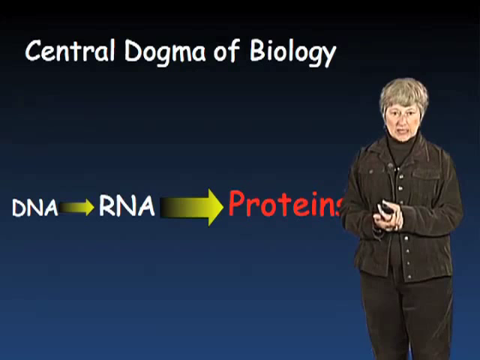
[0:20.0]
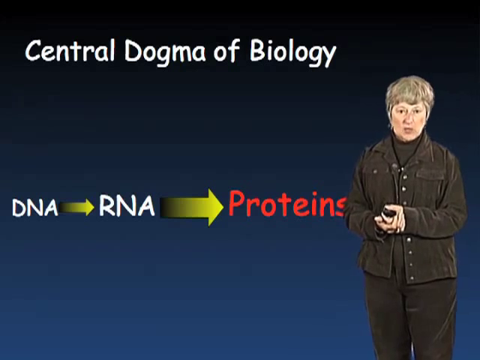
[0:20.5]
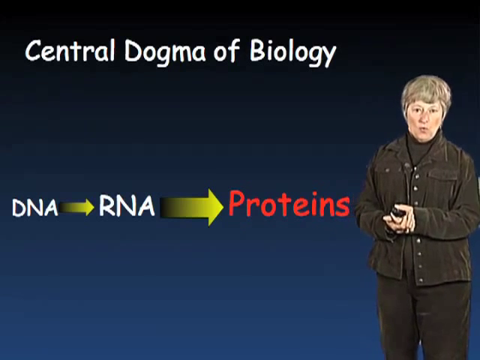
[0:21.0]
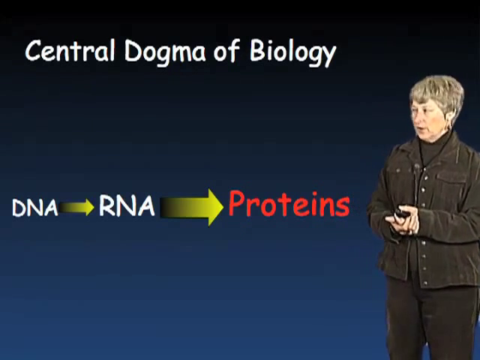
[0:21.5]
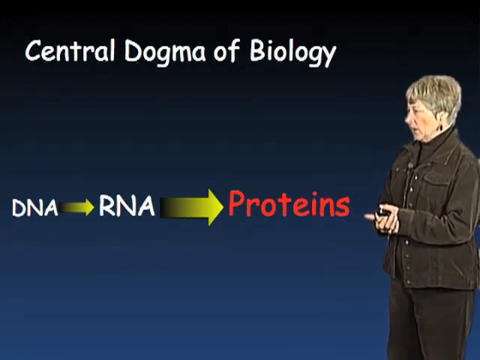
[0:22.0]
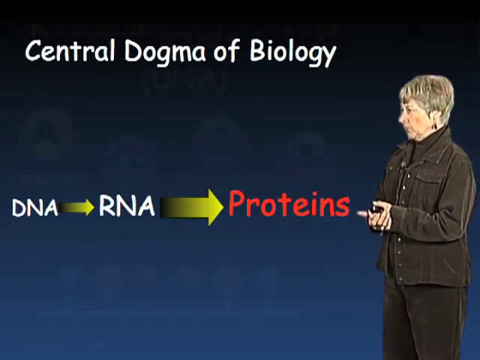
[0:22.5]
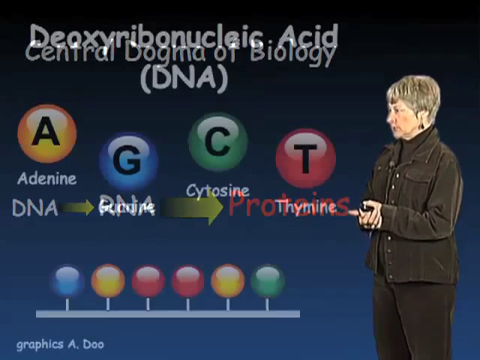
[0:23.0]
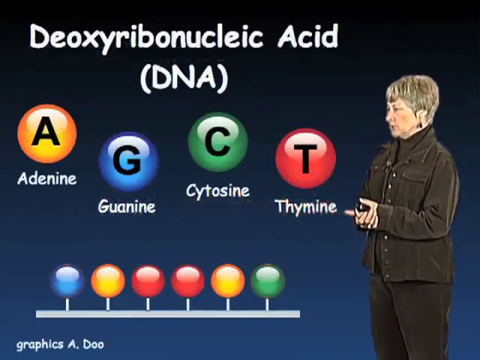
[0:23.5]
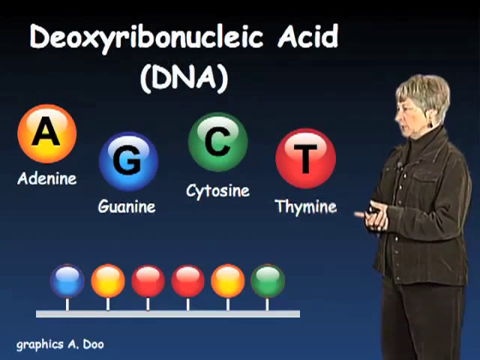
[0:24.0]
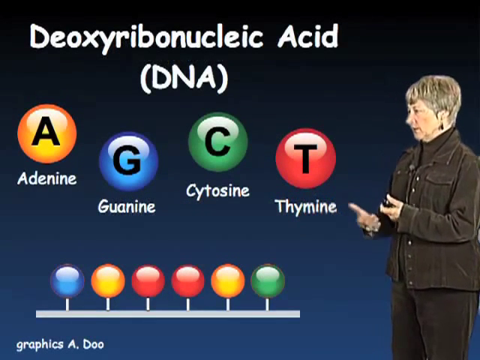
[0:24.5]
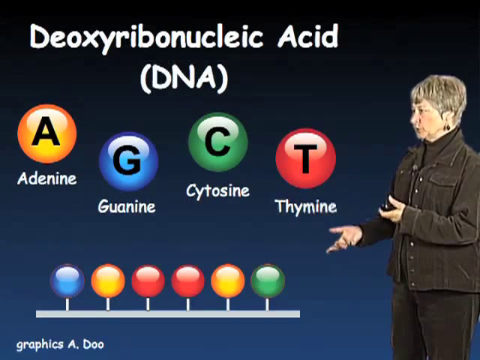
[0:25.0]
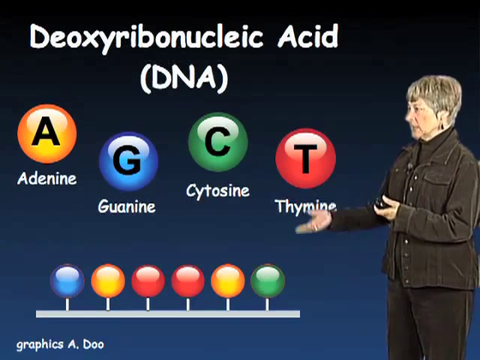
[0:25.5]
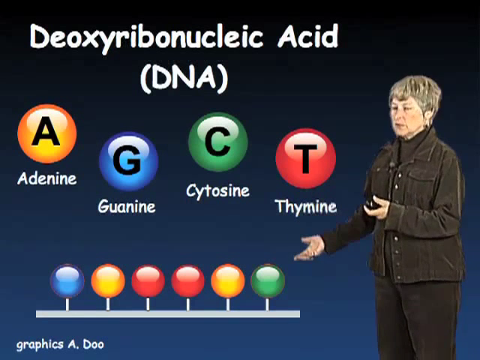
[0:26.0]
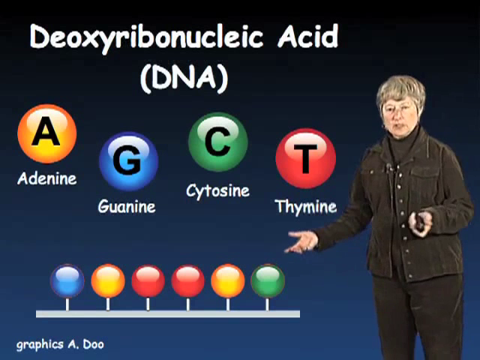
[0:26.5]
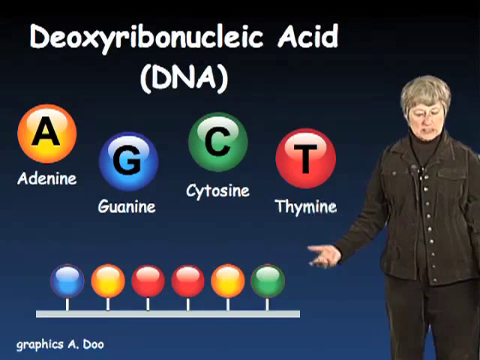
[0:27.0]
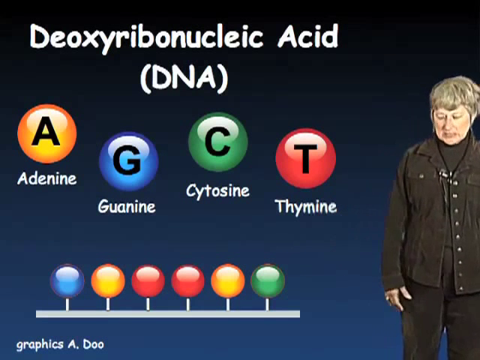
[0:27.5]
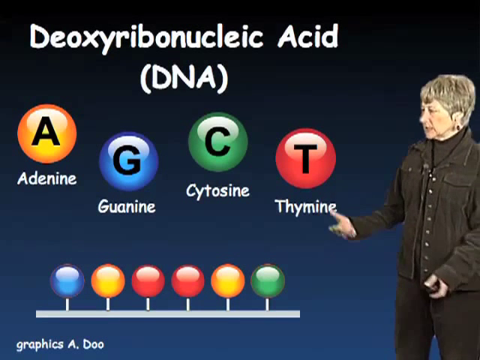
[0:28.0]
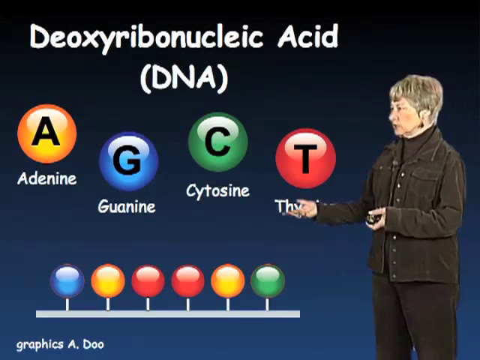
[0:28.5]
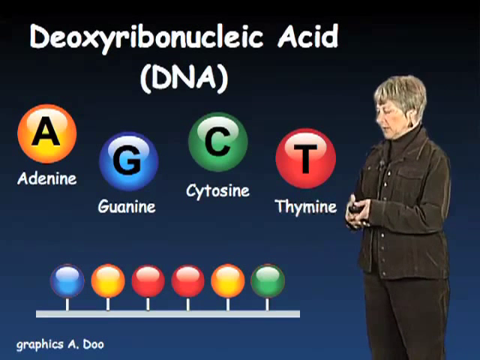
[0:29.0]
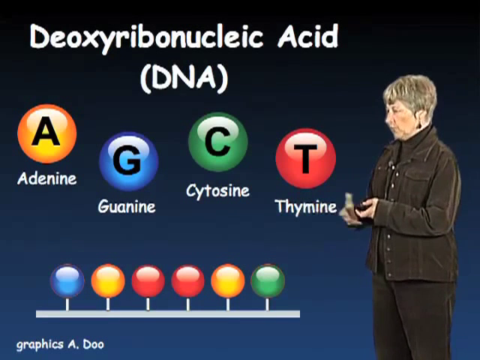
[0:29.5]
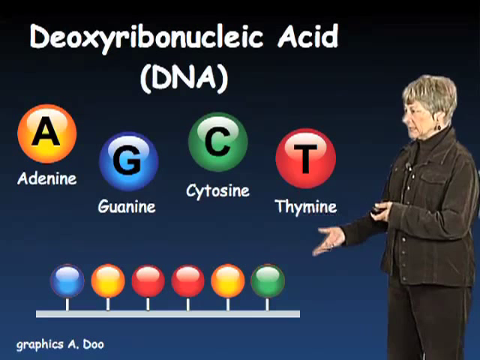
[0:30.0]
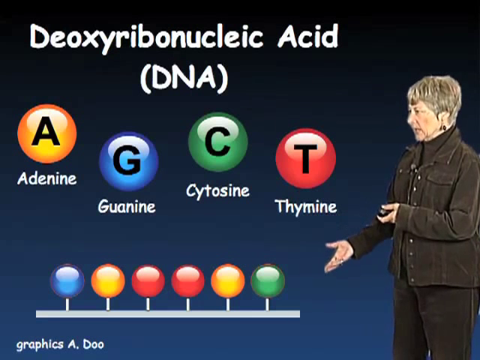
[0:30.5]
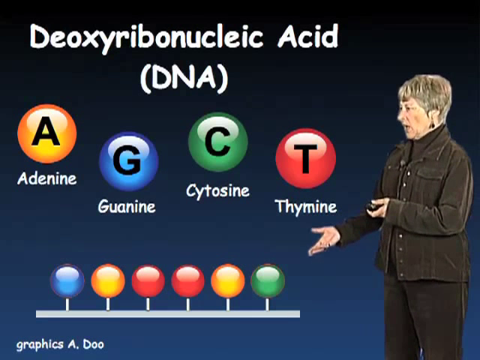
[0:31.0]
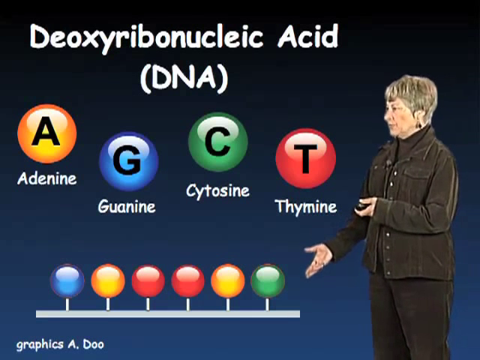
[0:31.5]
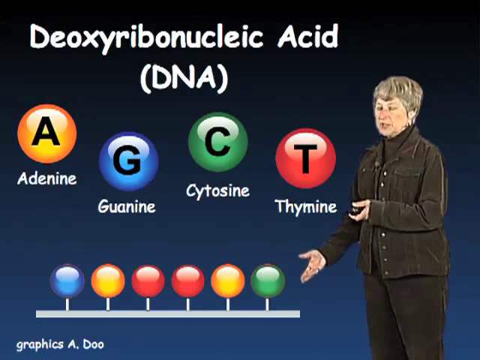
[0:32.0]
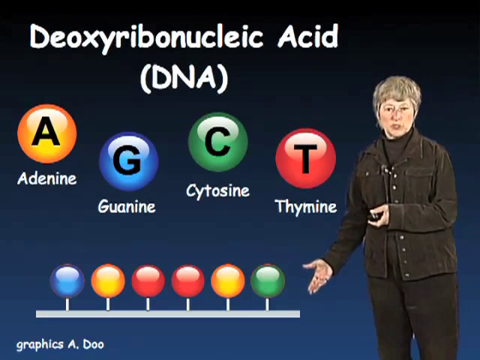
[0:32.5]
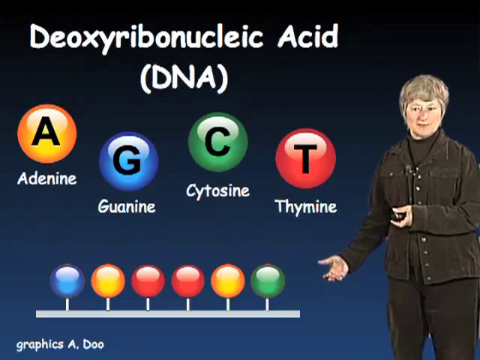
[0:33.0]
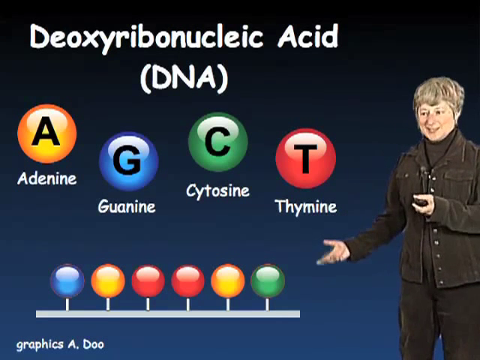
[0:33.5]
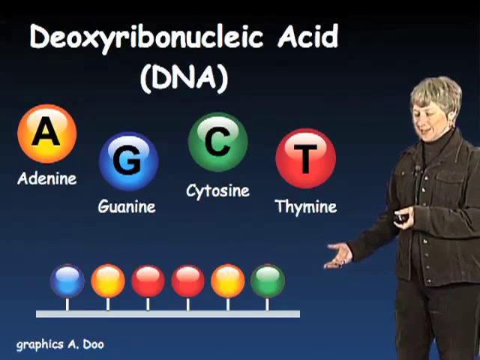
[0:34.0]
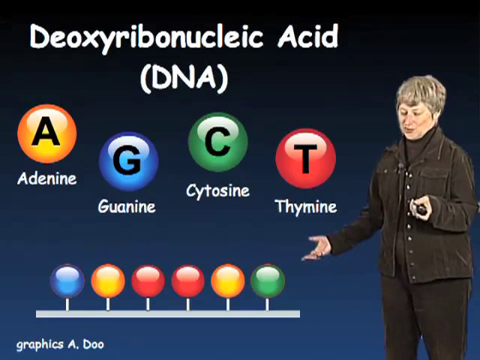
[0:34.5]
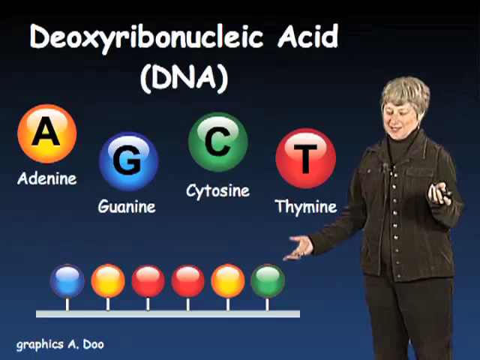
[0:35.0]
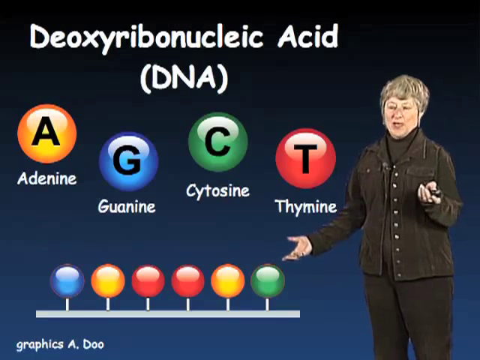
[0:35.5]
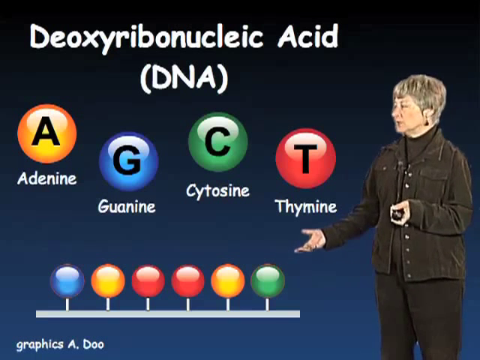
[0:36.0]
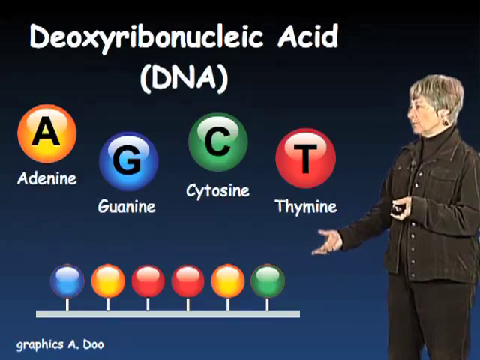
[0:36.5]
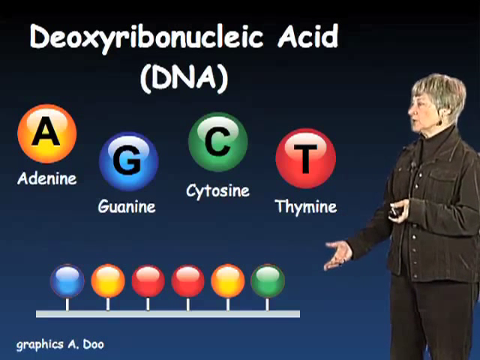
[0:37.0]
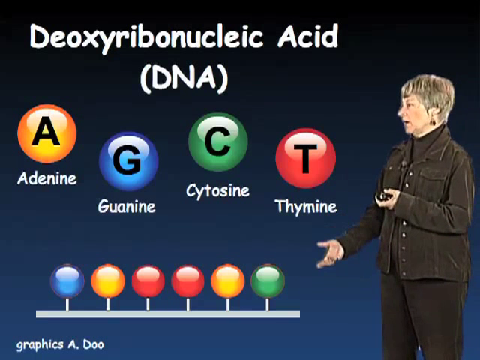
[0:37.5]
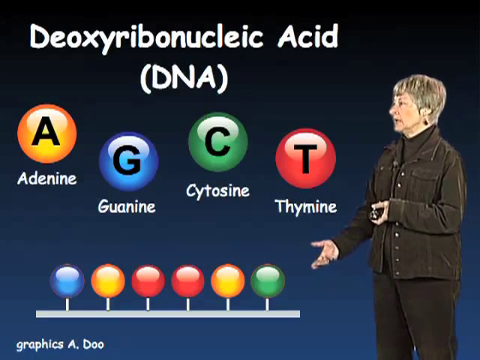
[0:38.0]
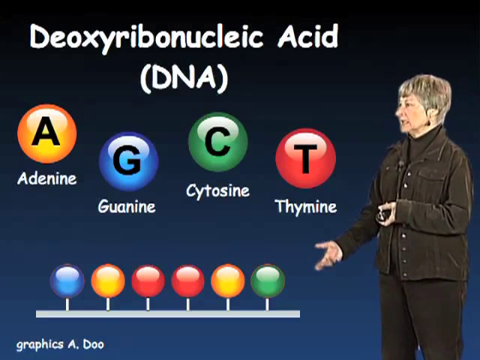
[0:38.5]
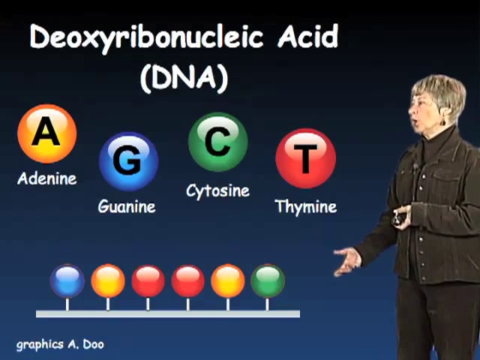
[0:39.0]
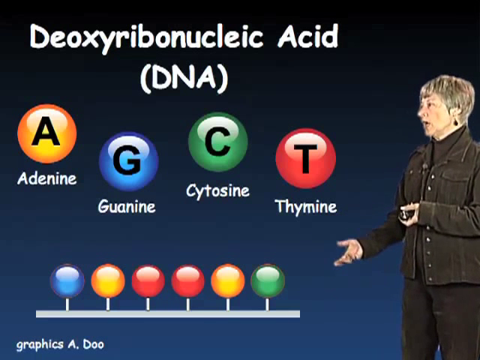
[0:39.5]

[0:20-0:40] A screen of text is shown with a person in the bottom right corner: a Caucasian woman with short gray hair, wearing a gray pants outfit with a gray turtleneck underneath the top. She speaks to the camera. The text at the top of the screen says "central dogma of biology" and the bottom says "DNA to RNA to proteins." She keeps talking and gesturing, holding a clicker in her left hand. A new screen reads "deoxyribonucleic acid (DNA)" and shows letters in colored circles: on the far left a yellow circle with the letter A, with "Adenine" beneath it; then a blue circle with a G labeled "Guanine"; a green circle with a C labeled "cytosine"; and a red circle with a T labeled "Thymine." In the bottom left corner are circles on sticks on a stand, colored from left to right blue, orange, red, red, orange, green. The speaker continues speaking, gesturing with her right hand.